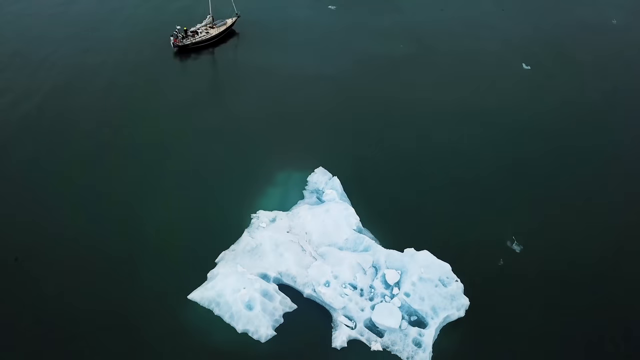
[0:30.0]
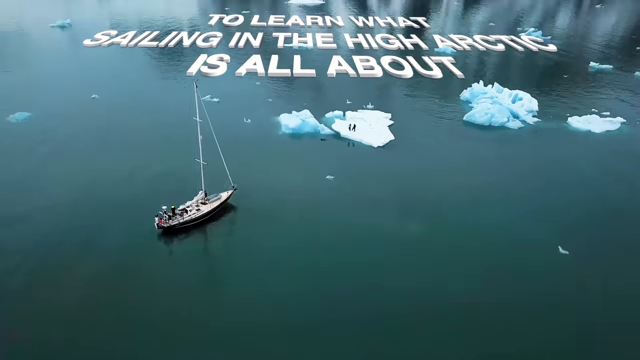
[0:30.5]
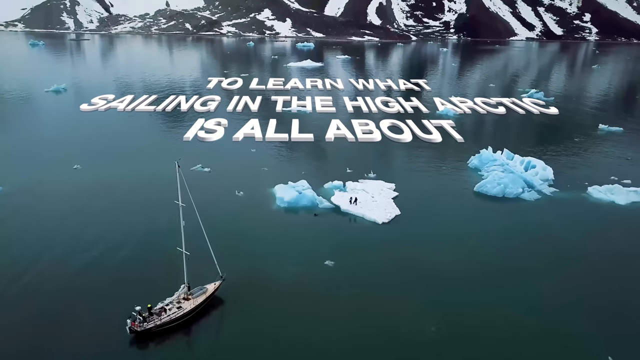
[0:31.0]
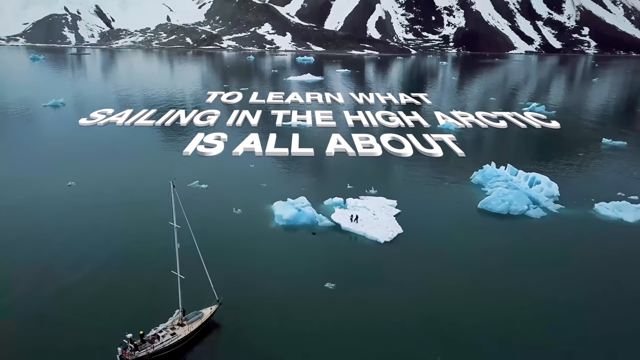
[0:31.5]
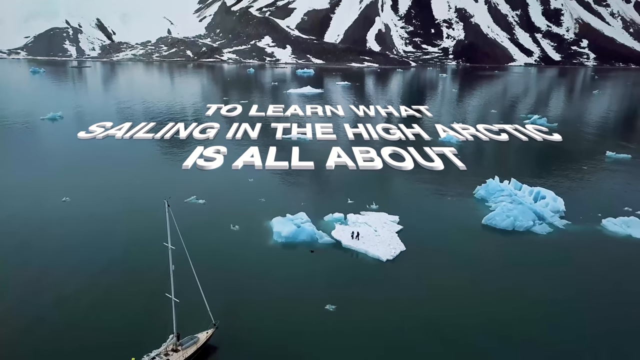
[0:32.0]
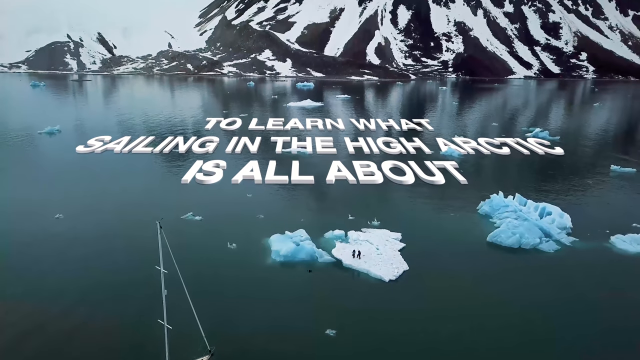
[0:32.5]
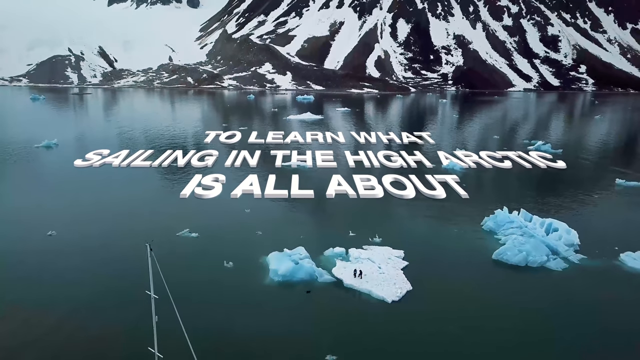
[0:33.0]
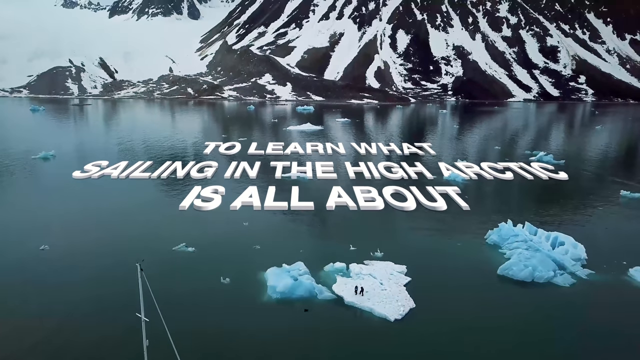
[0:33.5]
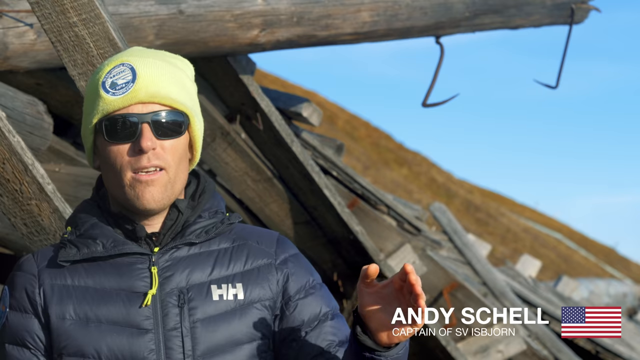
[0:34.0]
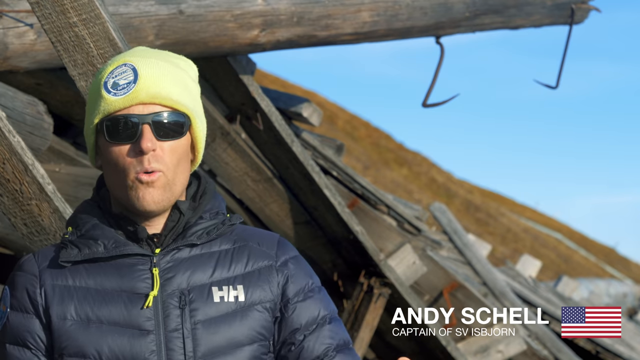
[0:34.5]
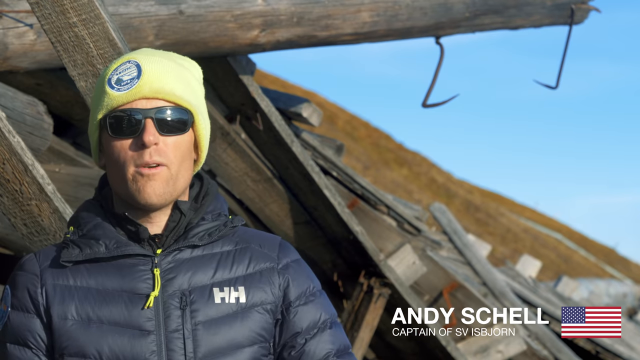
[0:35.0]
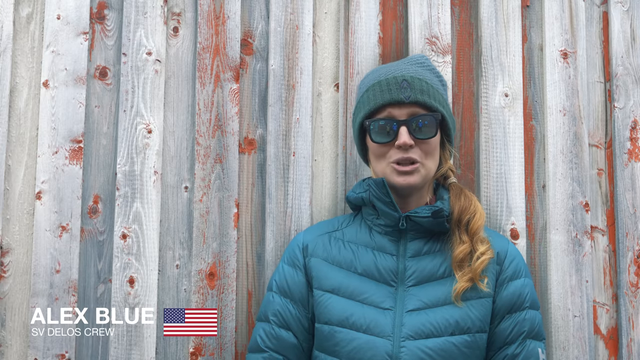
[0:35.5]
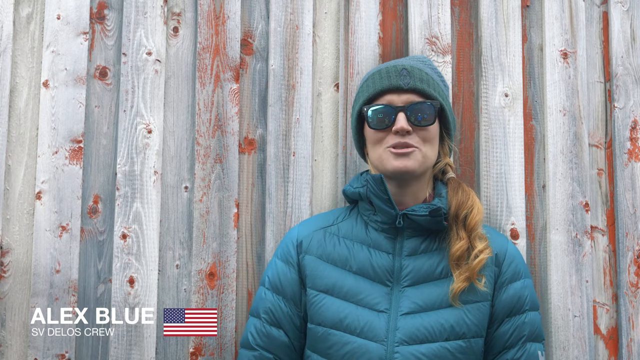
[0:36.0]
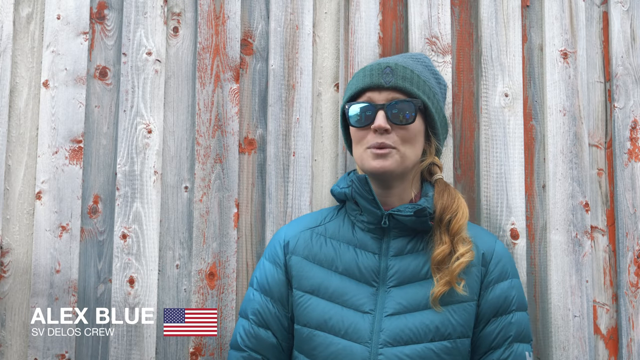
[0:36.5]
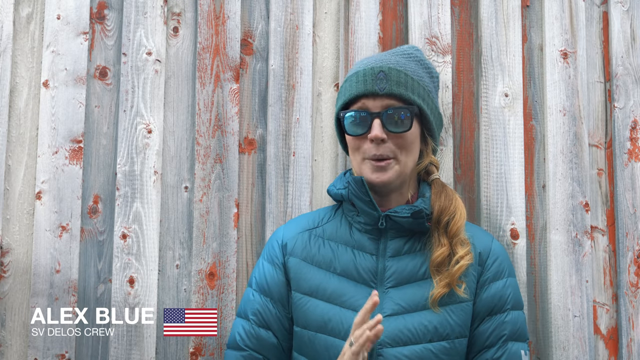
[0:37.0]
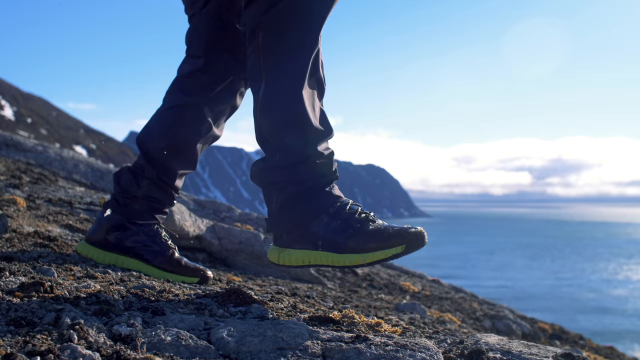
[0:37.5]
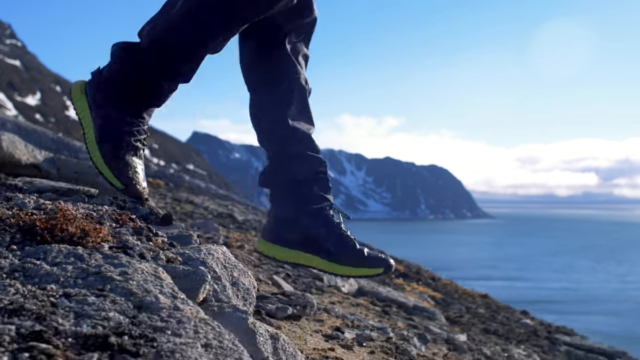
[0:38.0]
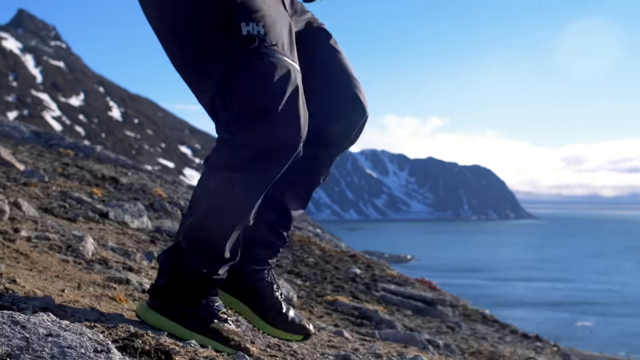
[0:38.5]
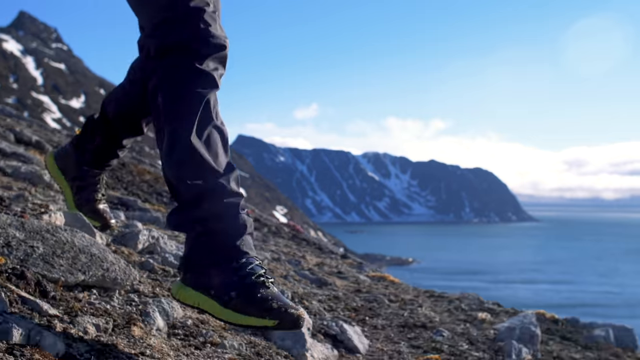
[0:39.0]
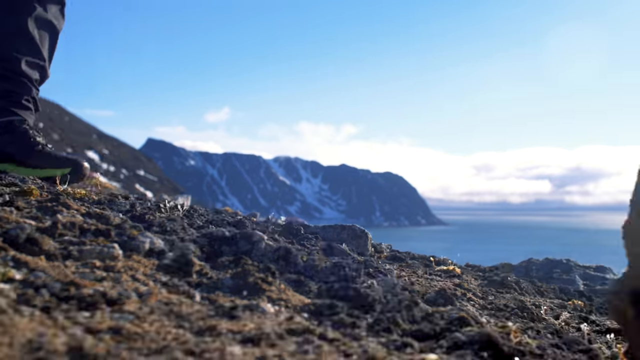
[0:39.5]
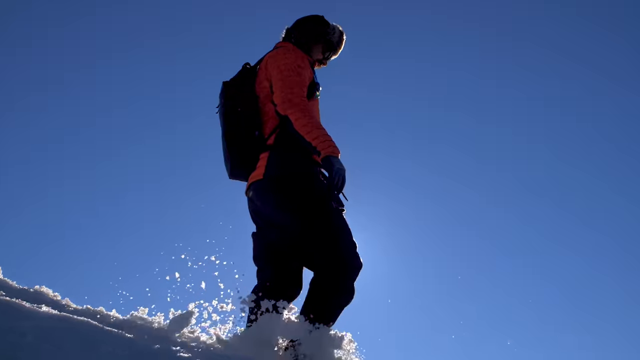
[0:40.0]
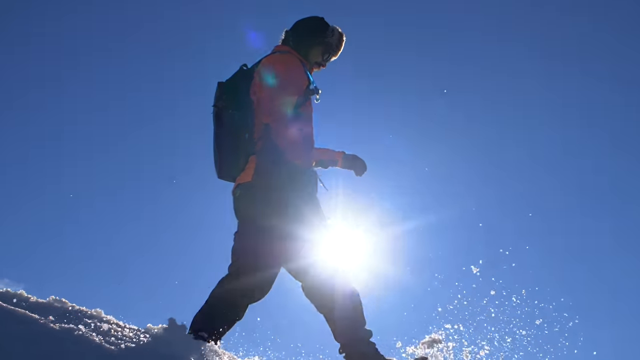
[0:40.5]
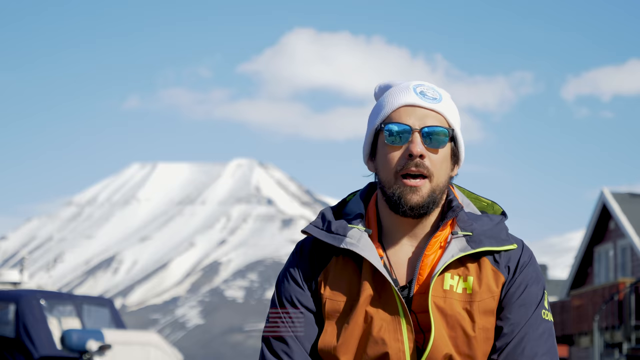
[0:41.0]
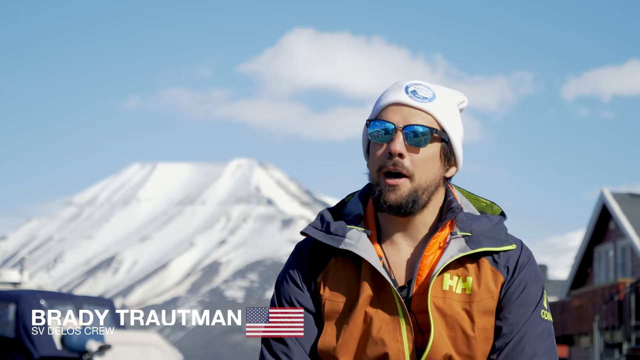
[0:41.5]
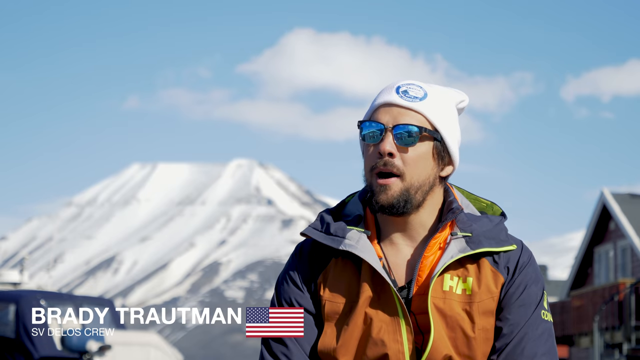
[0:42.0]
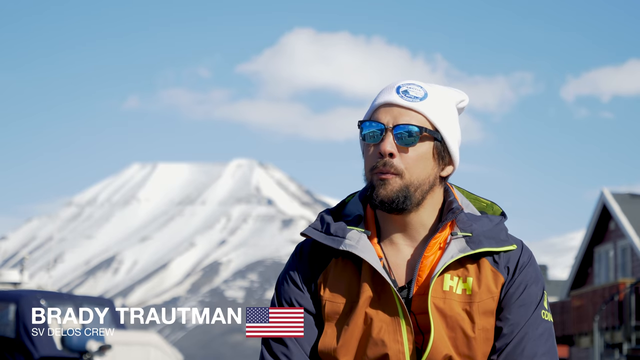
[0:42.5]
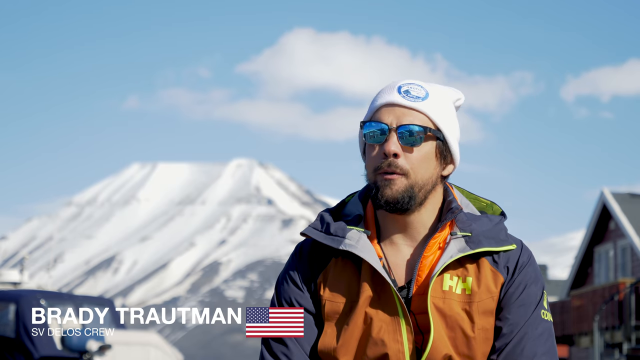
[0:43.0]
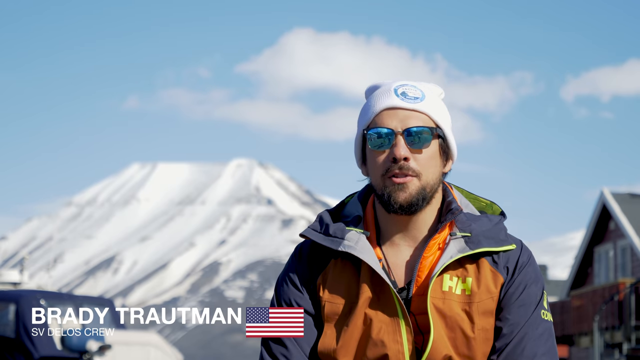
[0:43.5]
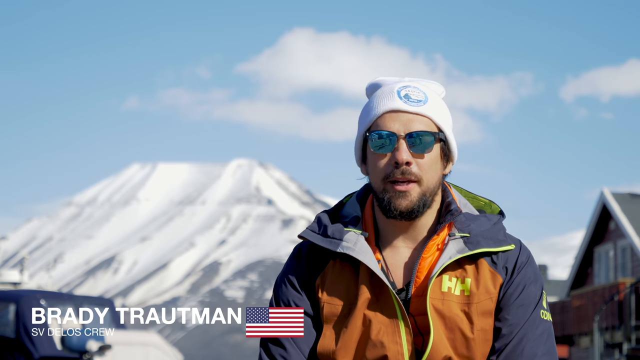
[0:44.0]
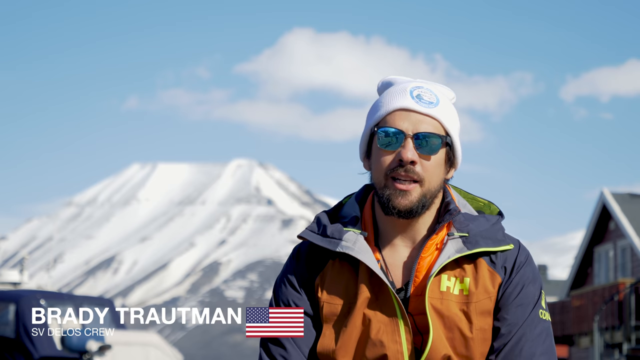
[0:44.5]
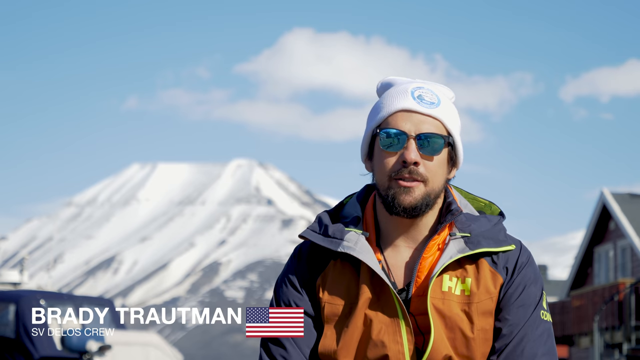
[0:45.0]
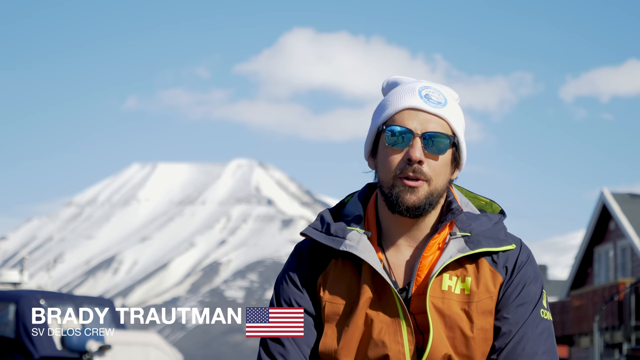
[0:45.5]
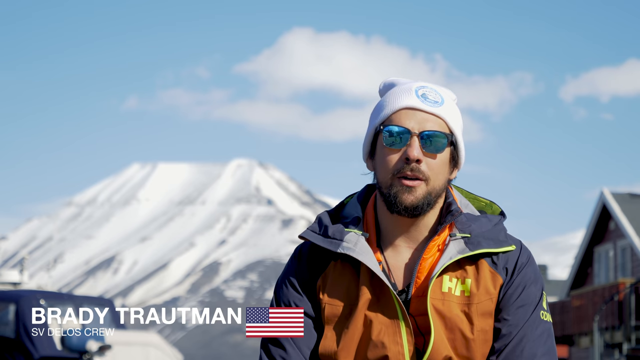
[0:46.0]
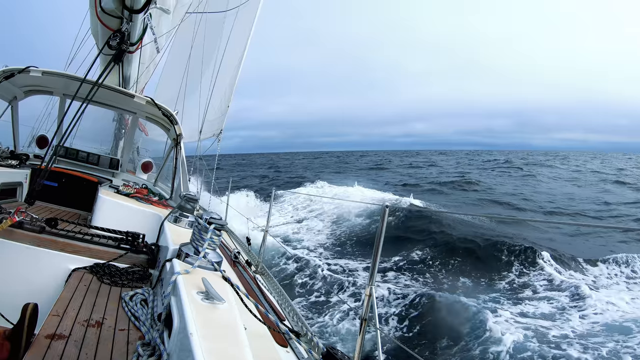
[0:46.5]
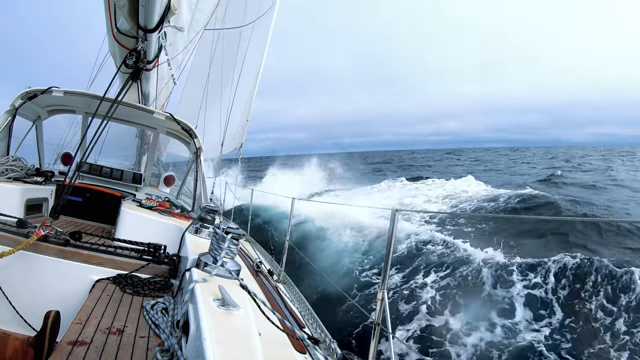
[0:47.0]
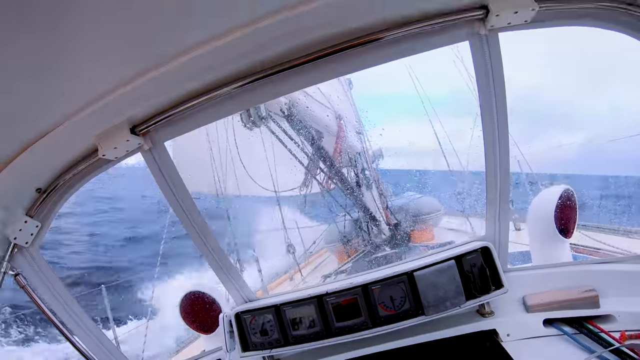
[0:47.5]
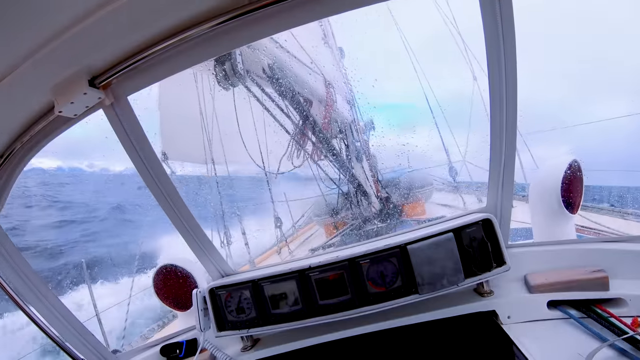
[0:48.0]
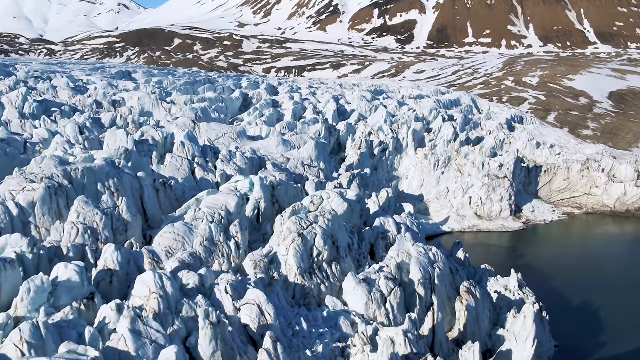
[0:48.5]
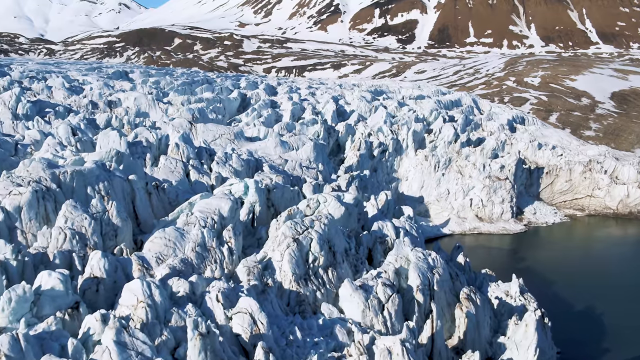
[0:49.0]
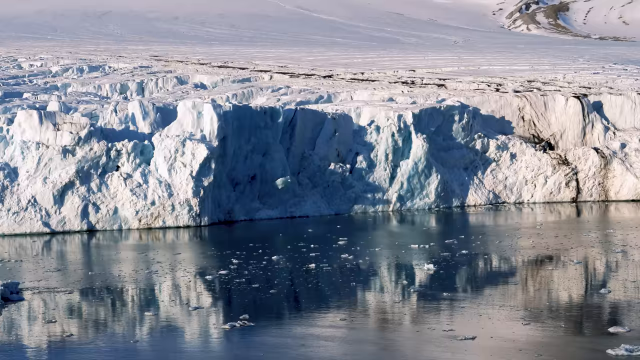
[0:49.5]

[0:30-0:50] A sailboat is shown with on-screen text about sailing, reading "to learn what sailing is about in the high Arctic". People outdoors in winter coats, sunglasses and hats are interviewed; one guy has his coat open. A sailboat goes through the waves. An aerial view looks down on the sailboat by a small glacier, part of which is sunk under the water. A girl and a guy are interviewed. A guy hikes down a mountain that is not snow-covered. Glaciers and their edges are shown, with melting snow plopping into the water.